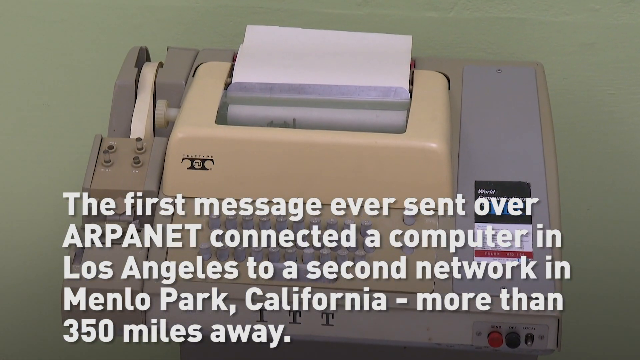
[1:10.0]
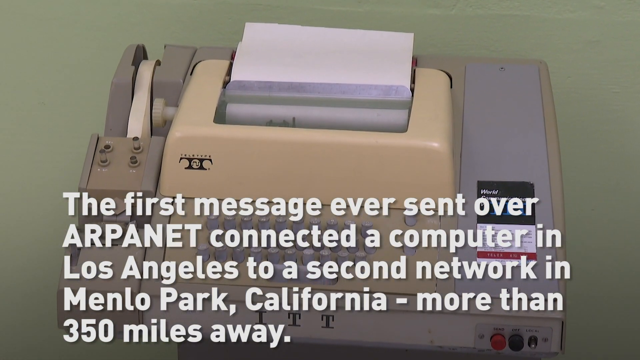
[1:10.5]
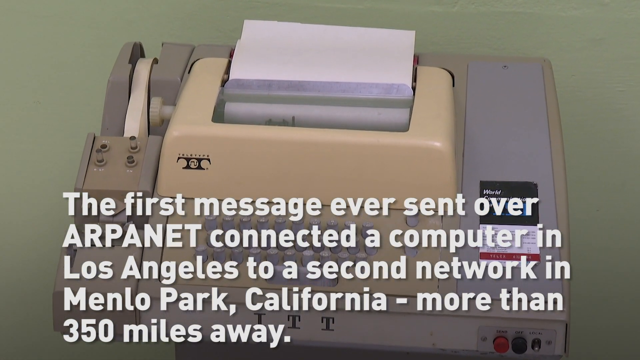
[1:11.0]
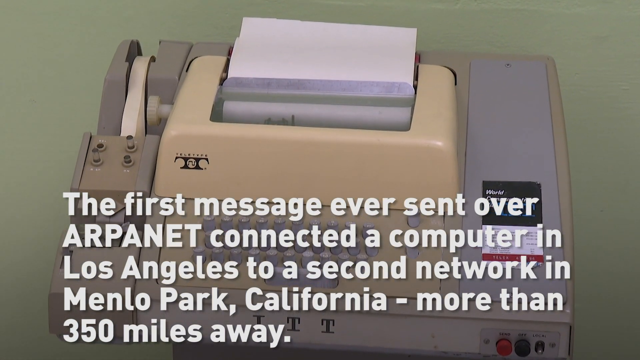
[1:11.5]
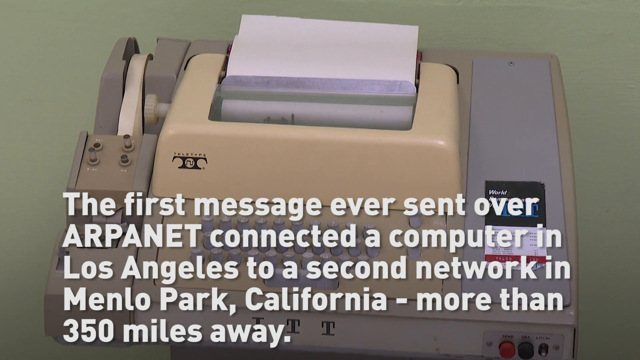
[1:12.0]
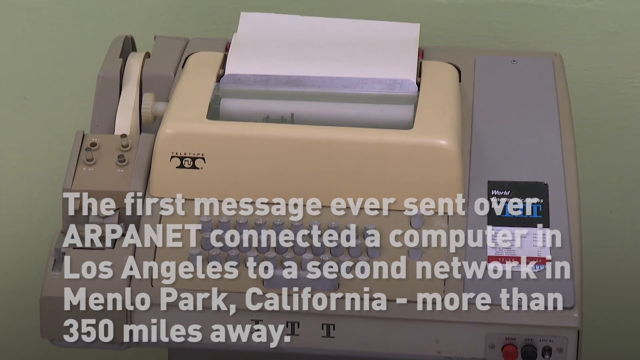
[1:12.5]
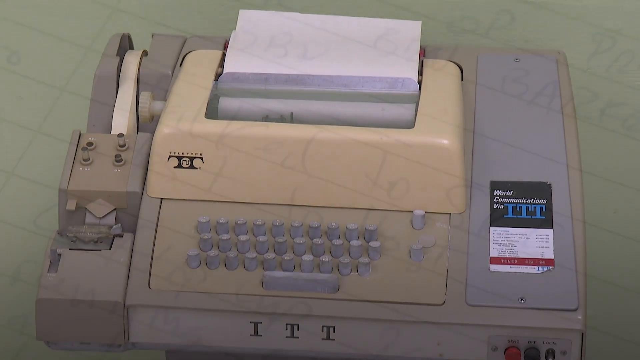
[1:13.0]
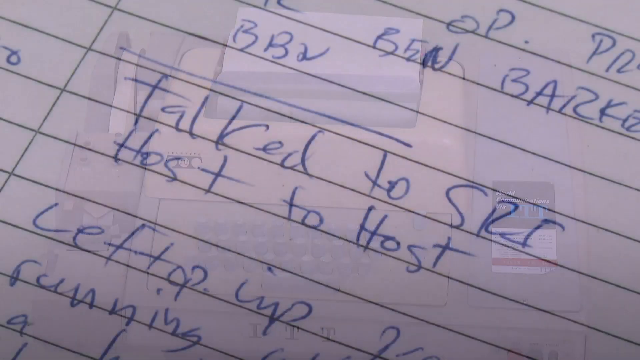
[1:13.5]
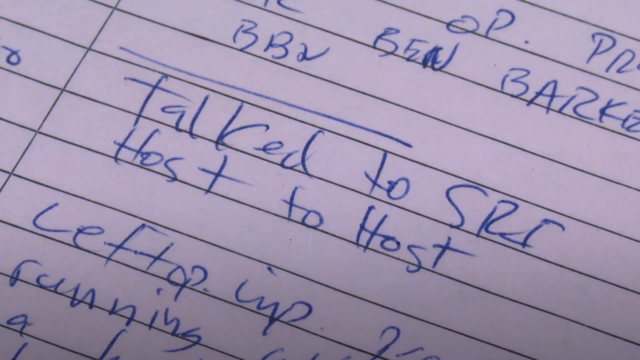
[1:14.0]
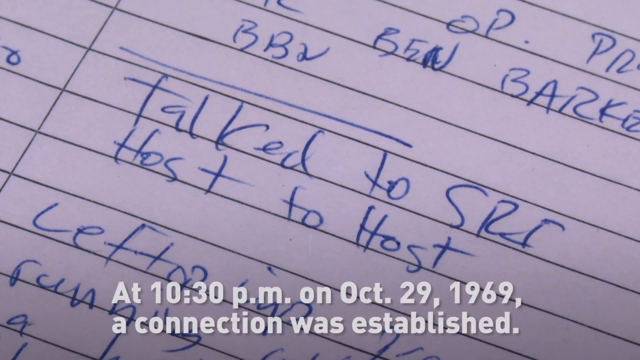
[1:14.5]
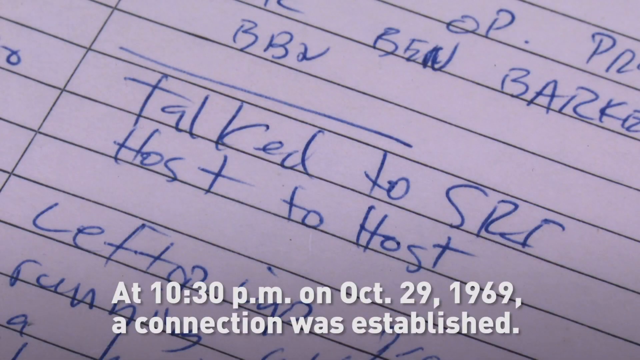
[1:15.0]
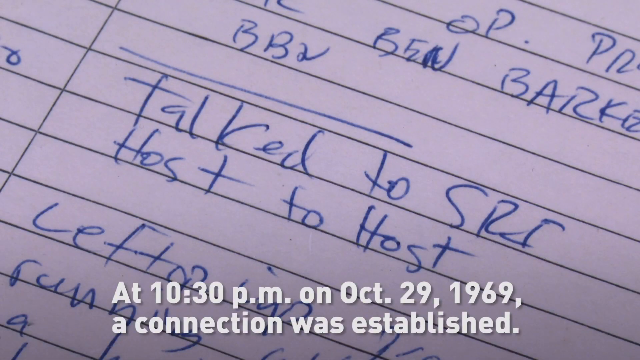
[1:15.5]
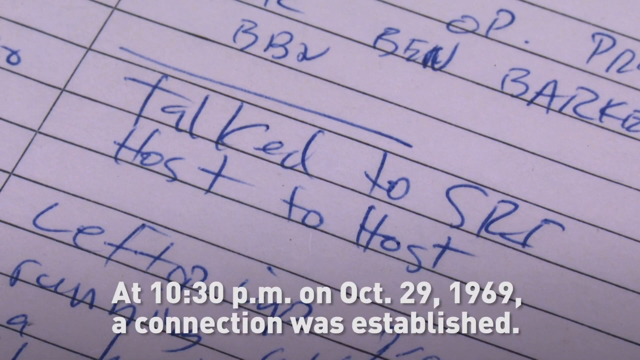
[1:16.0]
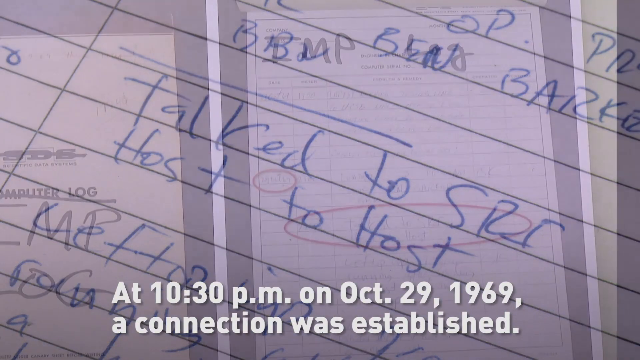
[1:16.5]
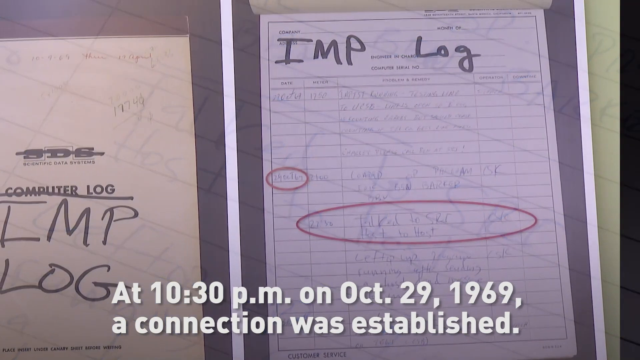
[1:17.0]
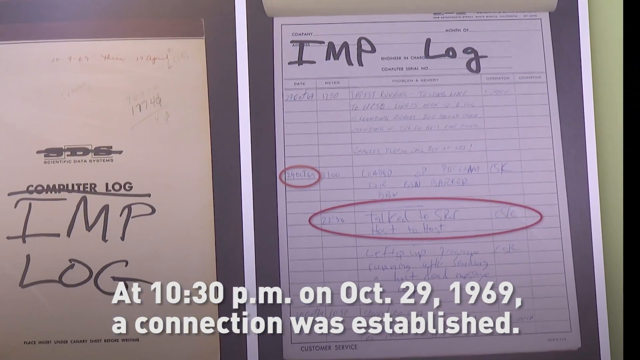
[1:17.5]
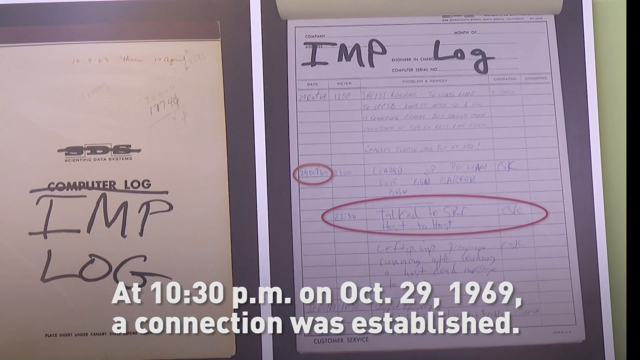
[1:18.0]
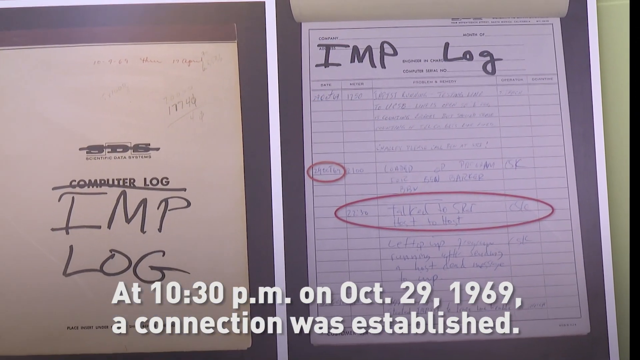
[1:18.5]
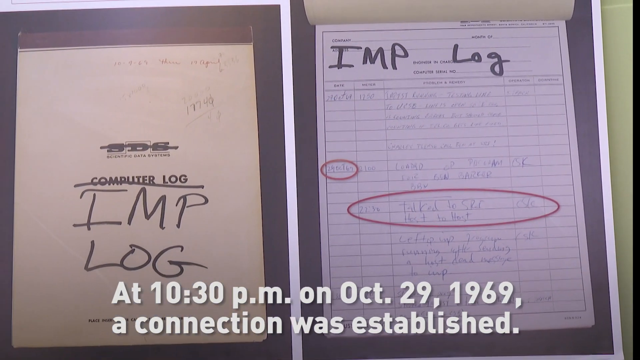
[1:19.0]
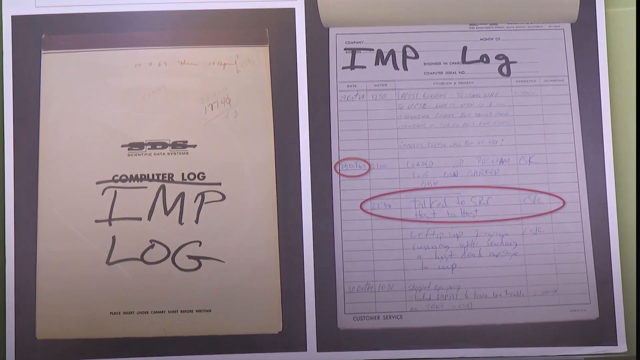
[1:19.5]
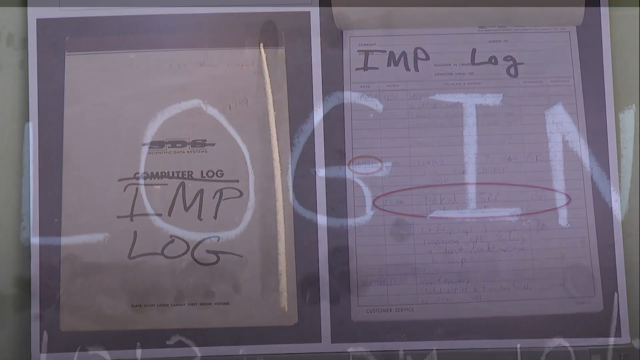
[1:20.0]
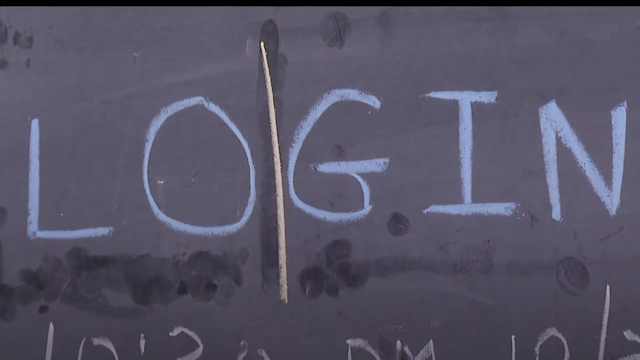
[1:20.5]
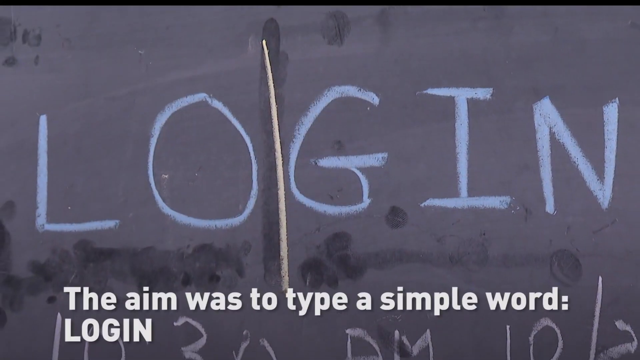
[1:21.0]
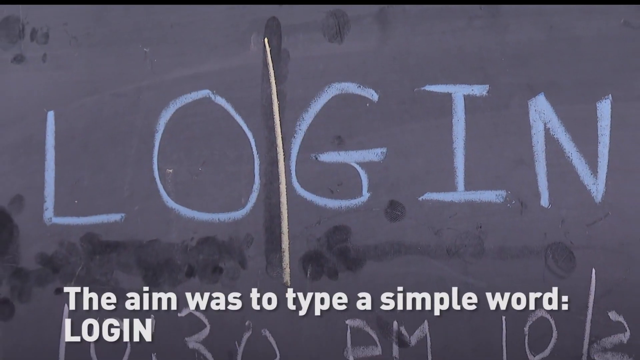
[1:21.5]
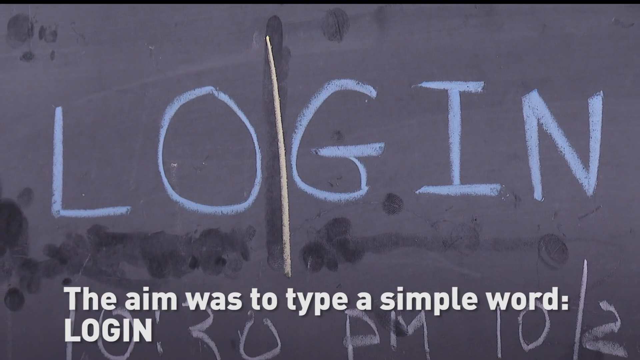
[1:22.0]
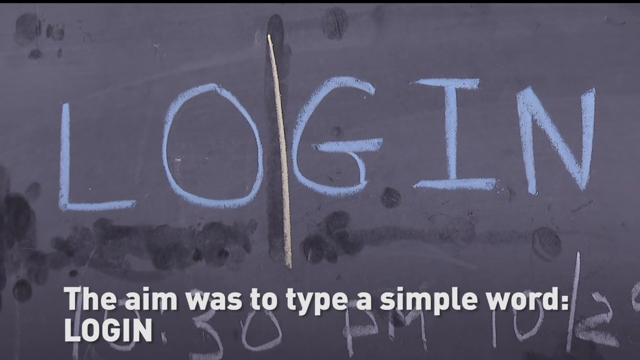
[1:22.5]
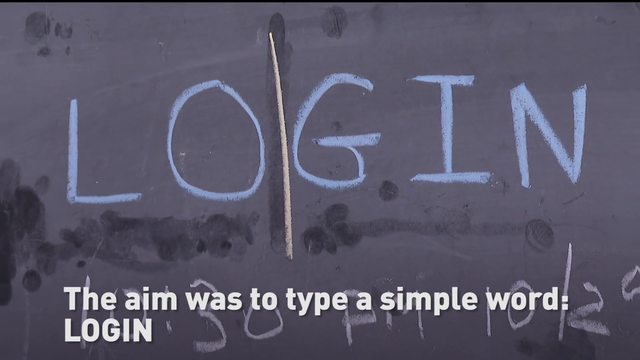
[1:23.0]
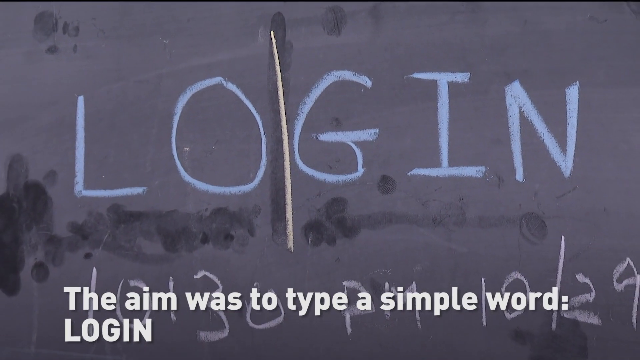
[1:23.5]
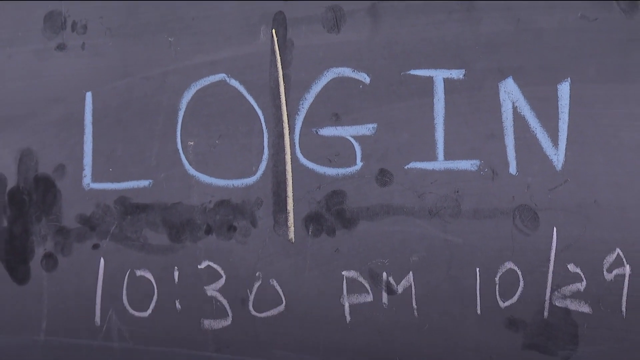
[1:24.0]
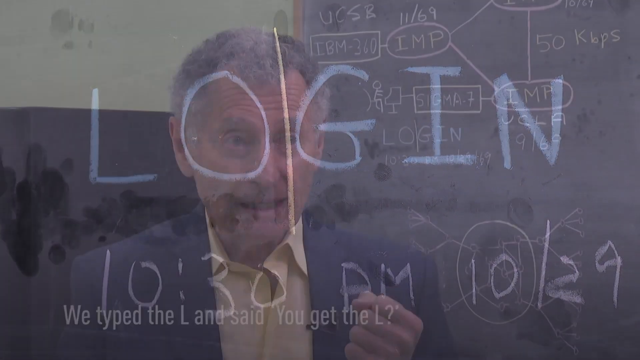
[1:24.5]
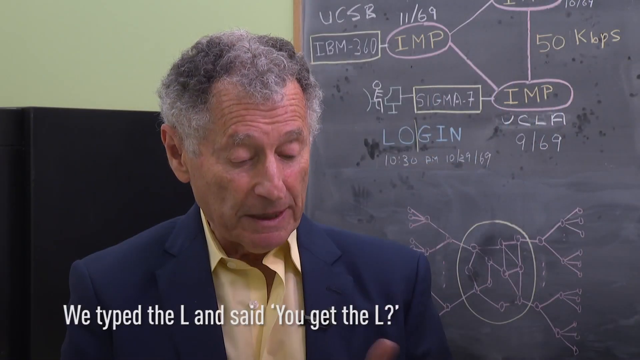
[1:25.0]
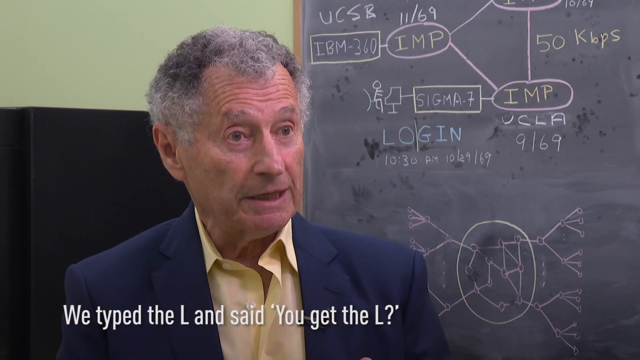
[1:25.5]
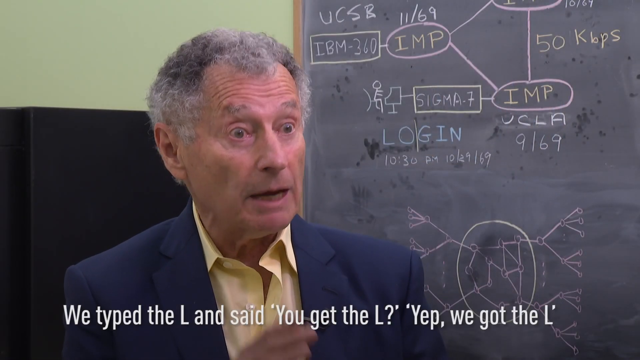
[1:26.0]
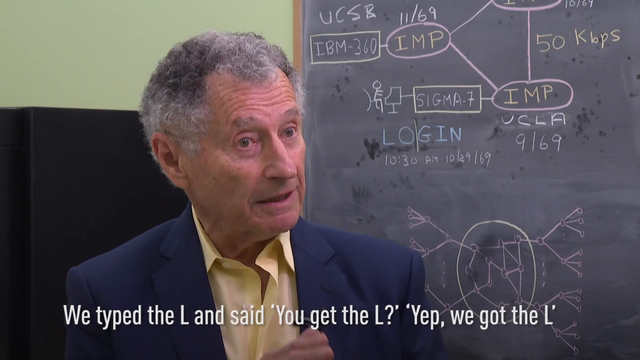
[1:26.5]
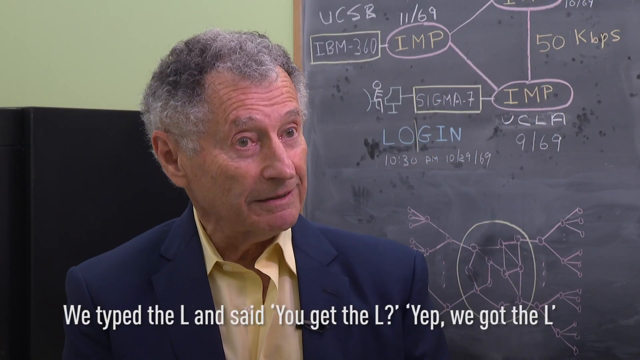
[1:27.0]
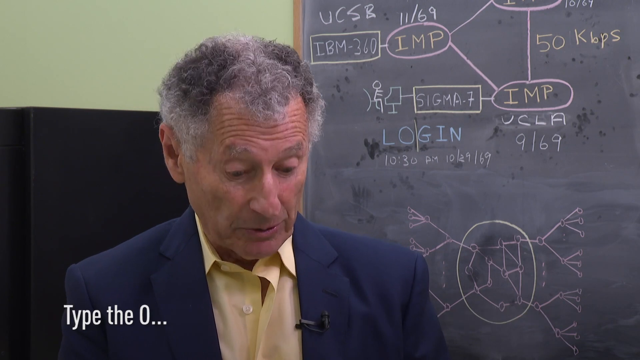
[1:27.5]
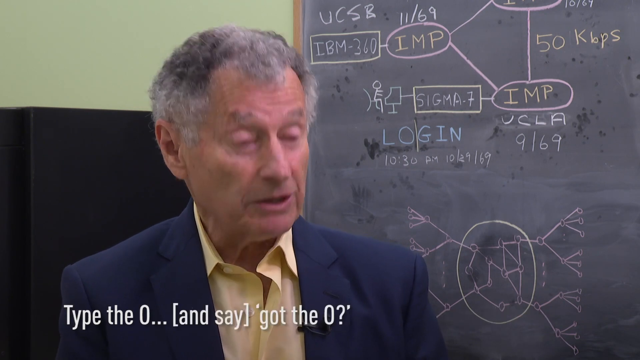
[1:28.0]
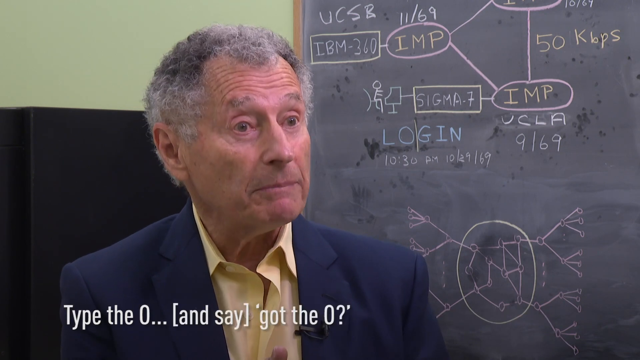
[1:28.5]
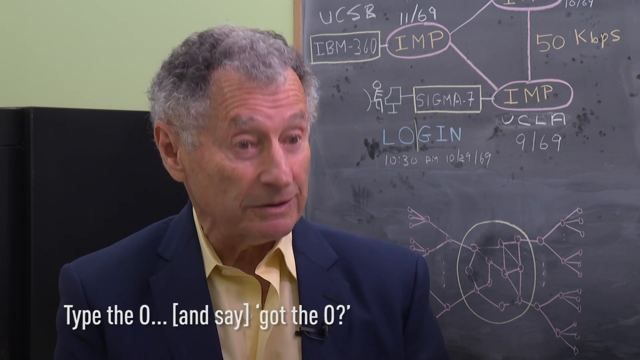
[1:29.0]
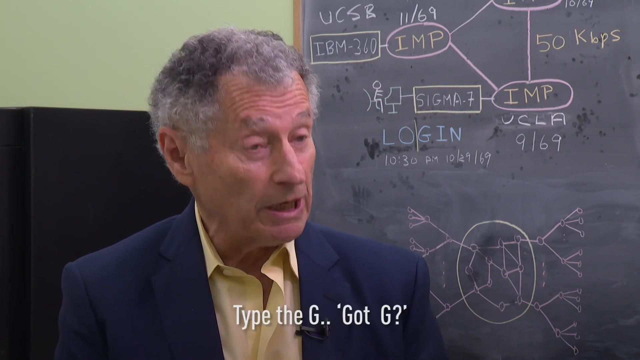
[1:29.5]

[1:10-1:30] A close-up shows a yellow machine that looks like a typewriter, with paper coming out the top and a keyboard of white cylindrical keys, while the caption reads, "The first message ever sent over ARPANET connected a computer in Los Angeles to a second network in Menlo Park, California, more than 350 miles away." A close-up follows of what looks like a piece of notebook paper with handwriting on it, captioned "At 10:30 p.m. on October 29, 1969, a connection was established." The scene switches to what look like two computer logs displayed on a board, then the word "LOGIN" written on a chalkboard, with the caption "The aim was to type a simple word: LOGIN." A man with gray hair sits in front of a chalkboard as the caption changes while he speaks, the full text being "We typed the L and said, 'You get the L?' 'Yep, we got the L. Type the O. . . [and say] 'Got the O?' Type the G, 'Got G?' Crash!" As he says this, he claps his hands together.